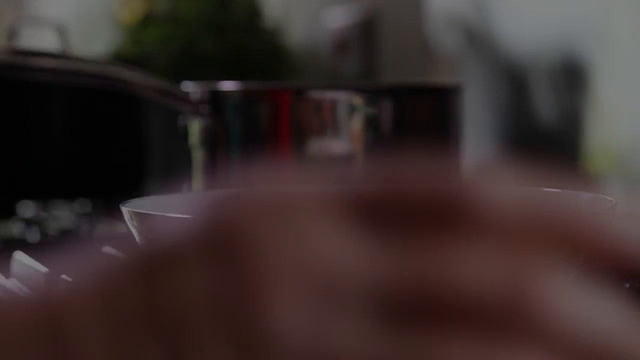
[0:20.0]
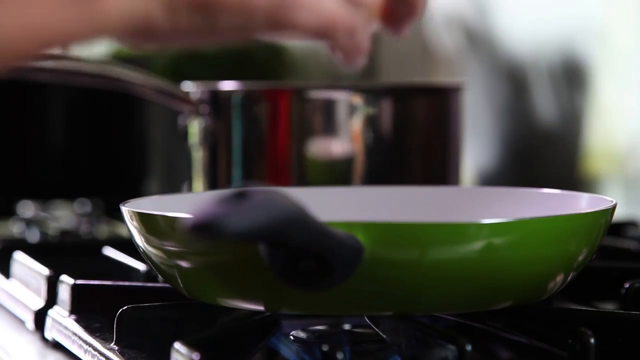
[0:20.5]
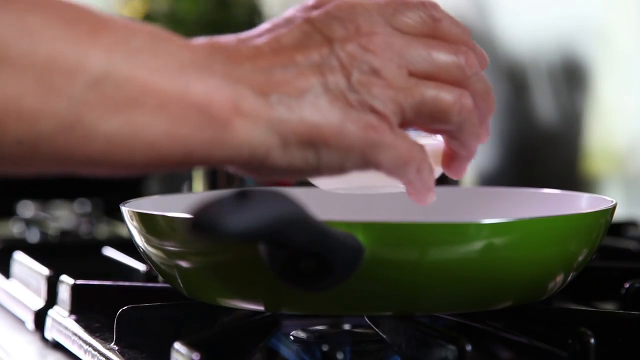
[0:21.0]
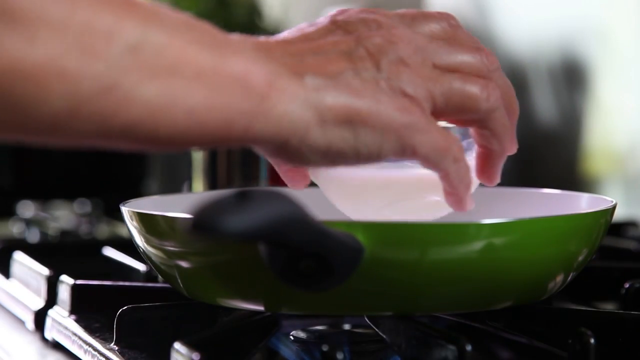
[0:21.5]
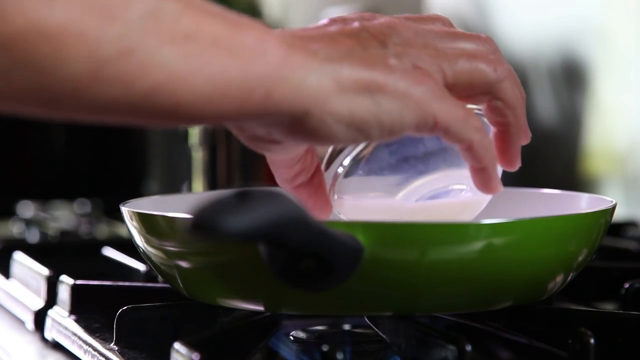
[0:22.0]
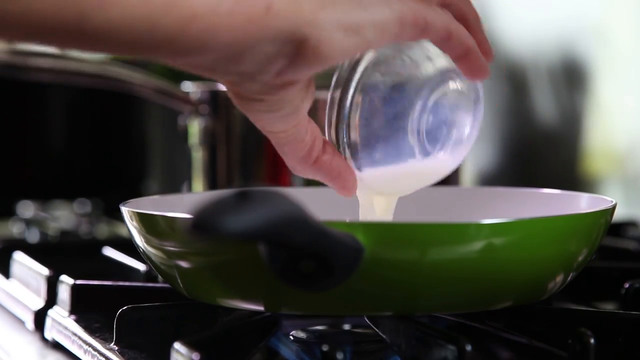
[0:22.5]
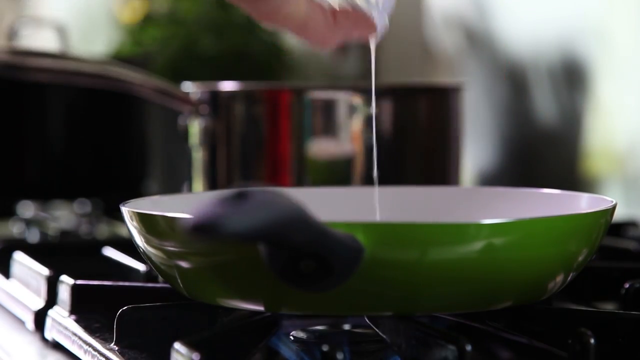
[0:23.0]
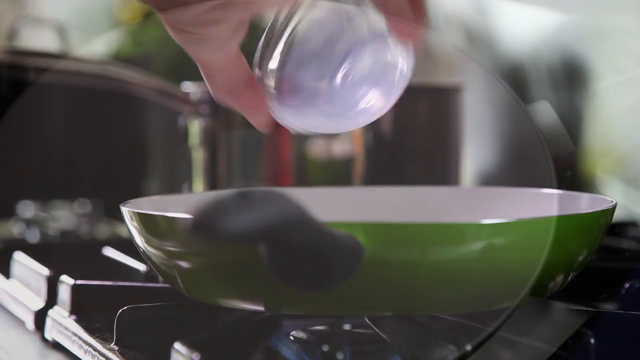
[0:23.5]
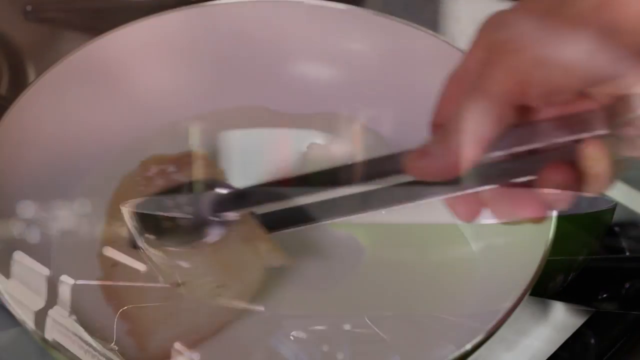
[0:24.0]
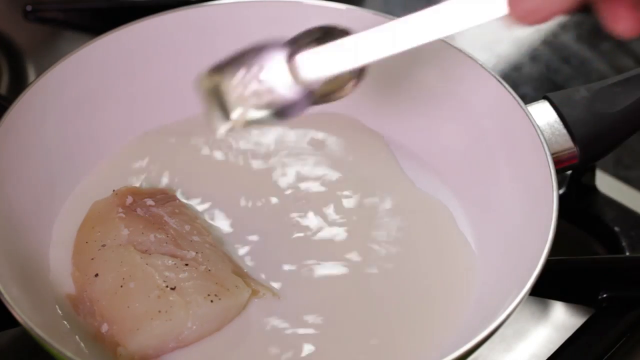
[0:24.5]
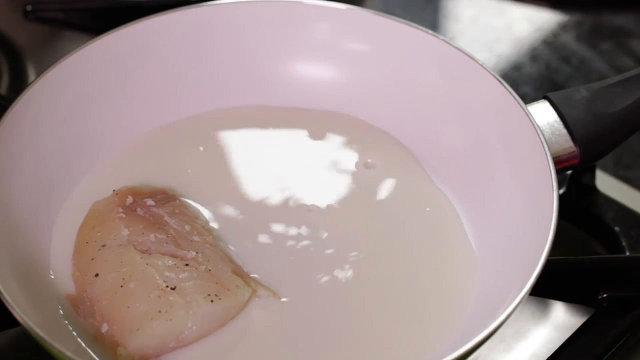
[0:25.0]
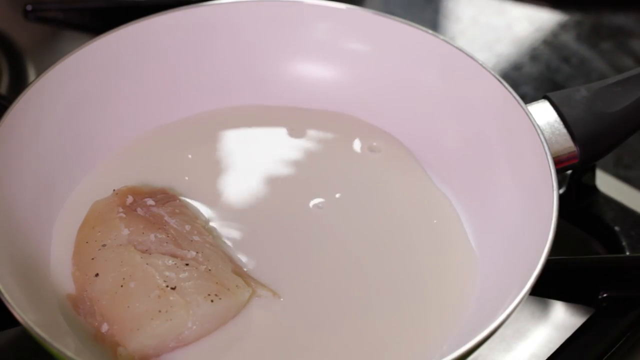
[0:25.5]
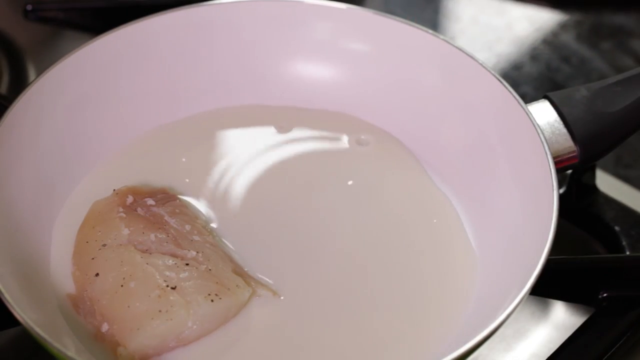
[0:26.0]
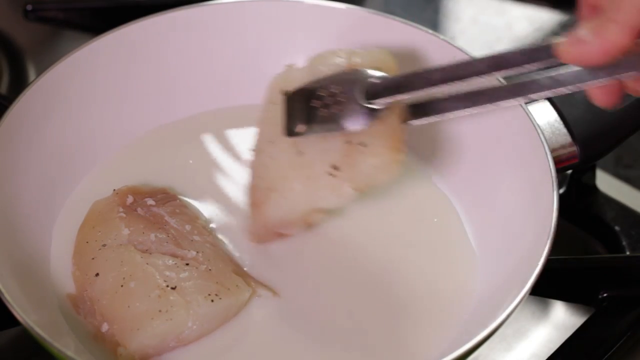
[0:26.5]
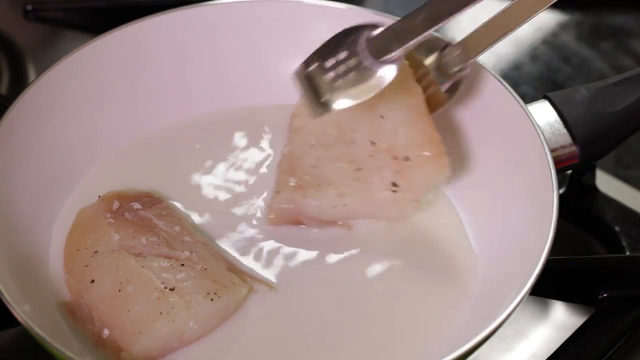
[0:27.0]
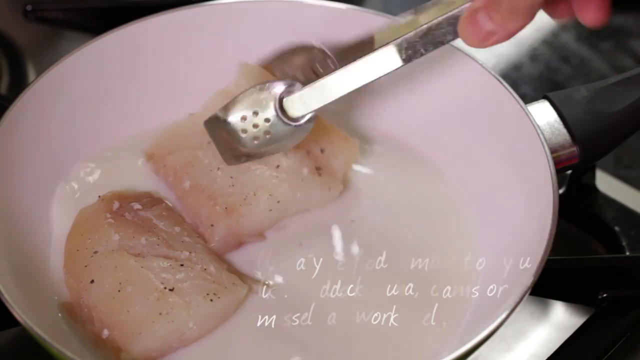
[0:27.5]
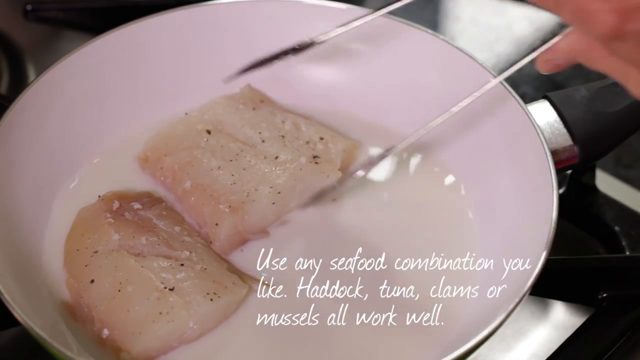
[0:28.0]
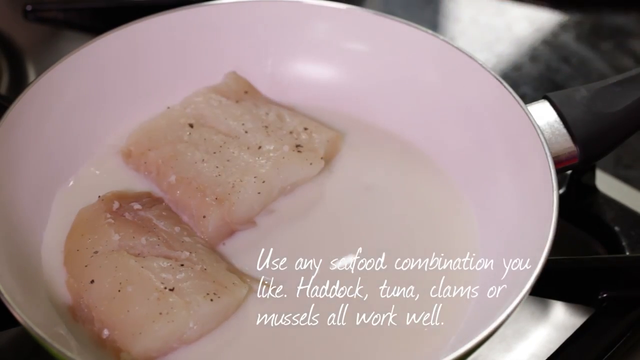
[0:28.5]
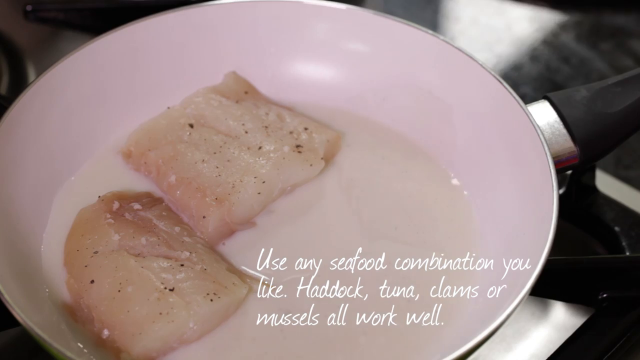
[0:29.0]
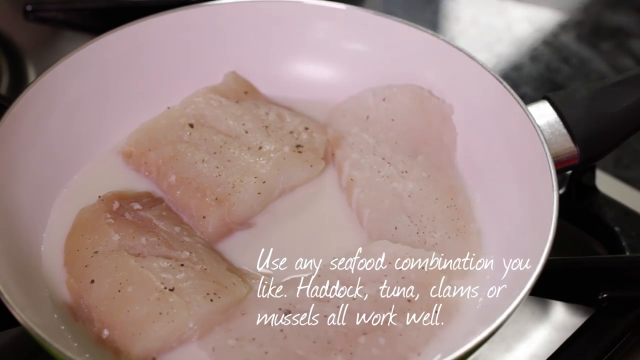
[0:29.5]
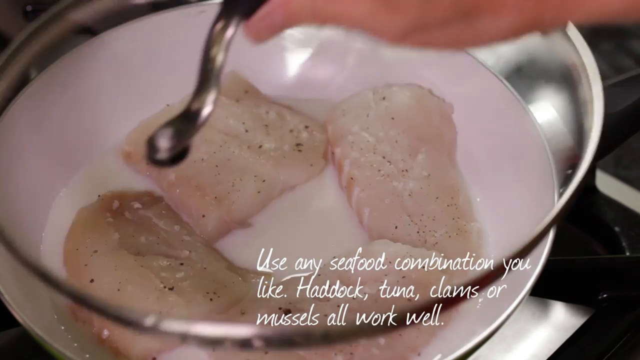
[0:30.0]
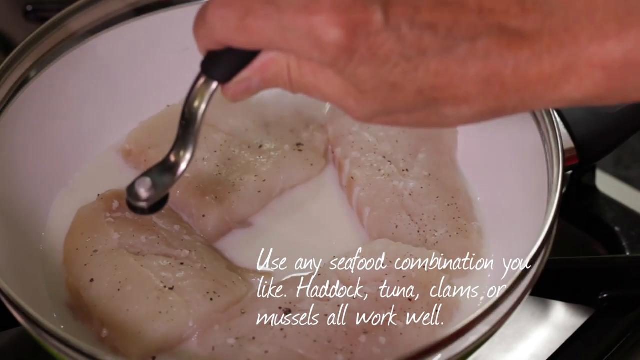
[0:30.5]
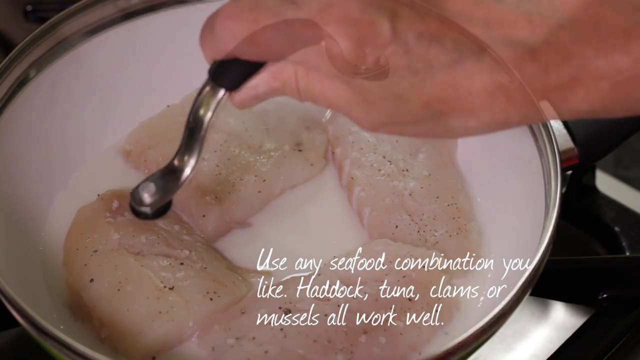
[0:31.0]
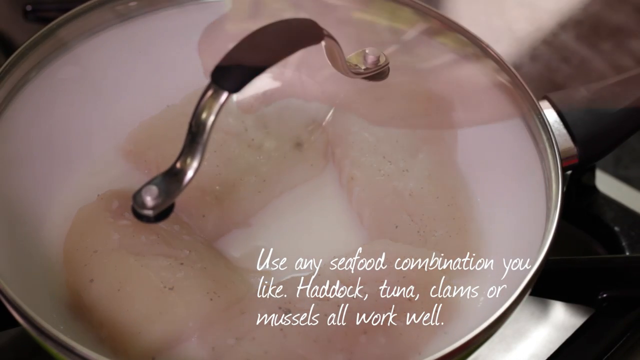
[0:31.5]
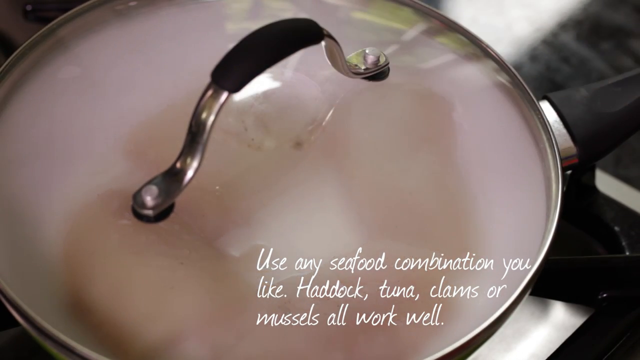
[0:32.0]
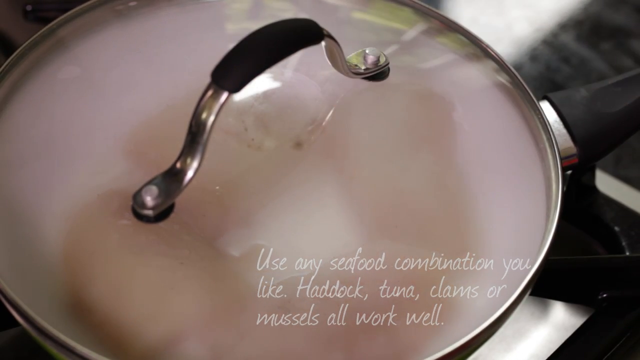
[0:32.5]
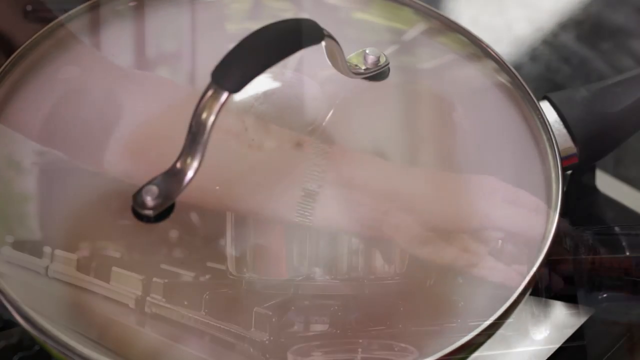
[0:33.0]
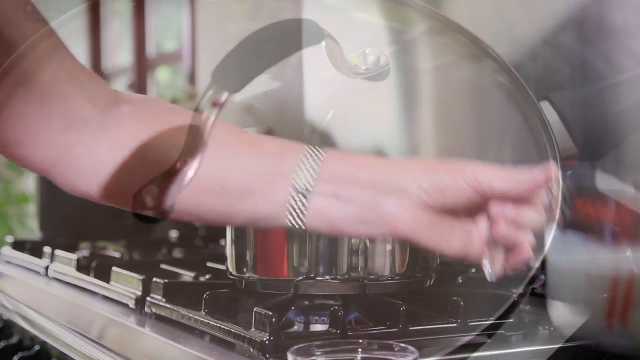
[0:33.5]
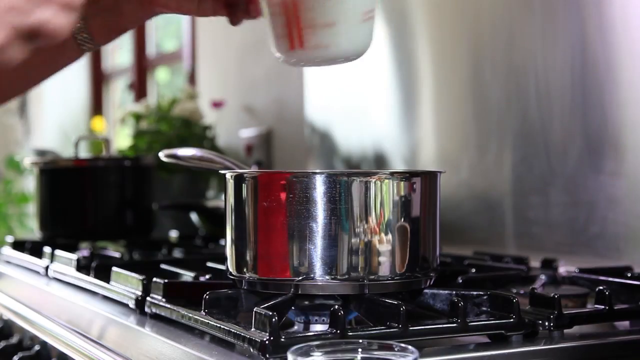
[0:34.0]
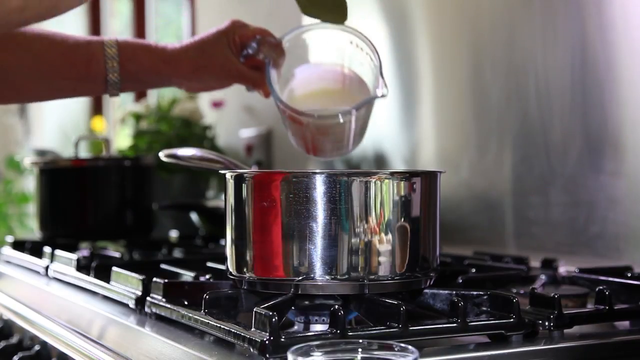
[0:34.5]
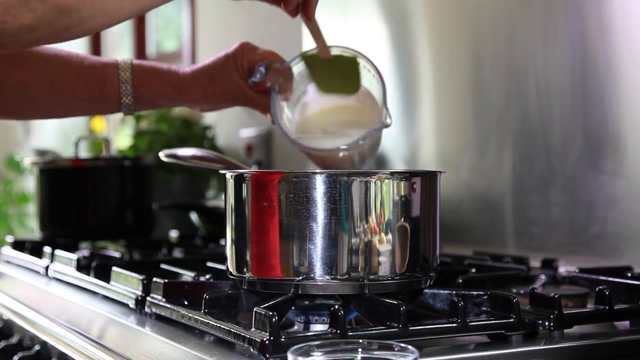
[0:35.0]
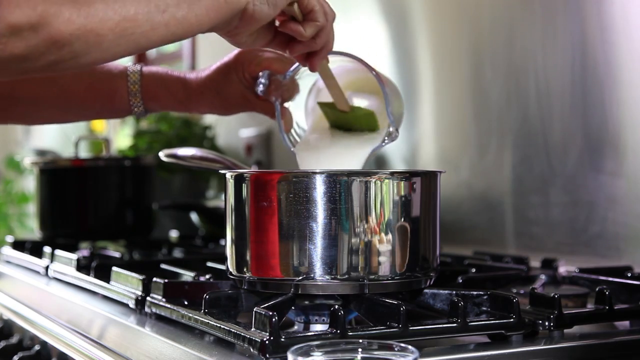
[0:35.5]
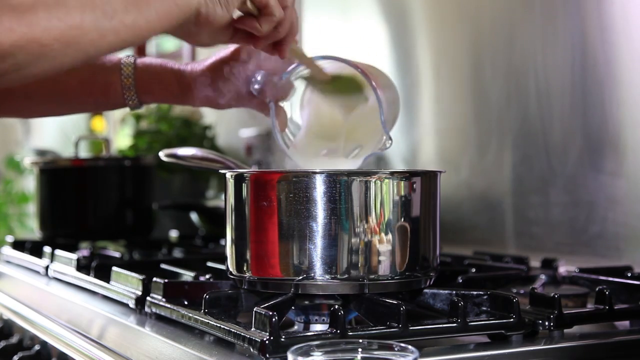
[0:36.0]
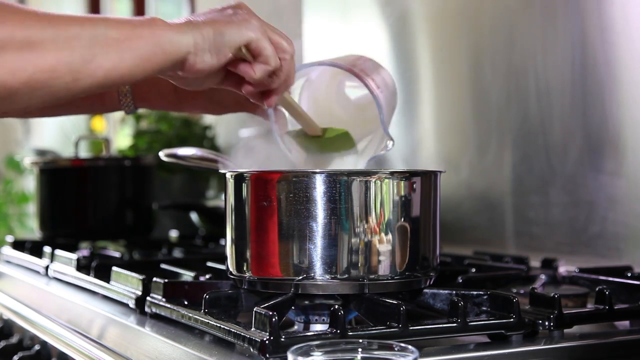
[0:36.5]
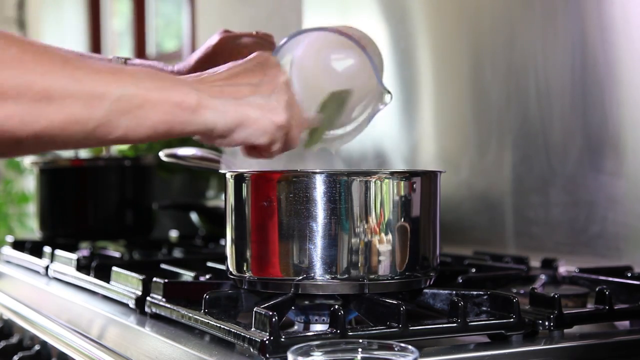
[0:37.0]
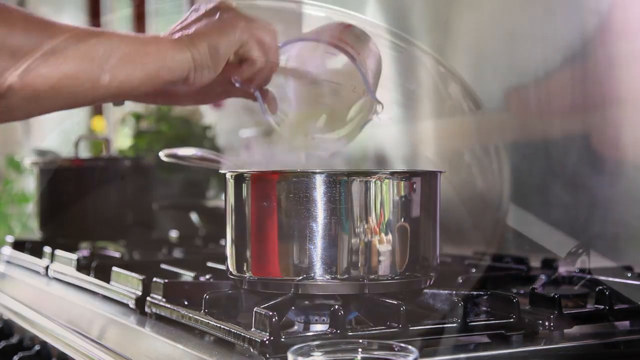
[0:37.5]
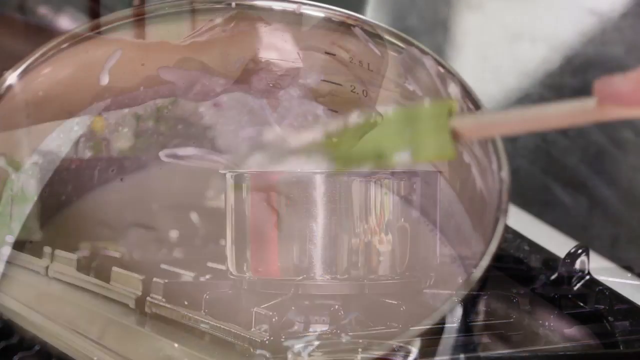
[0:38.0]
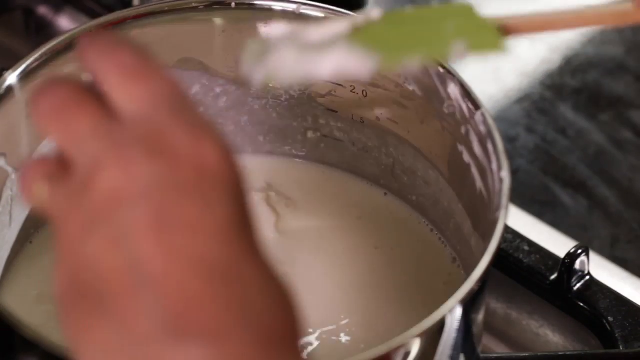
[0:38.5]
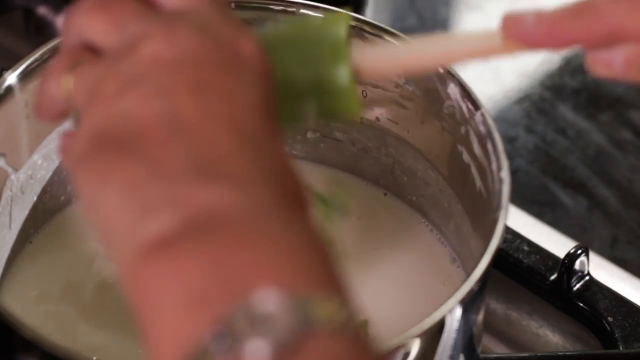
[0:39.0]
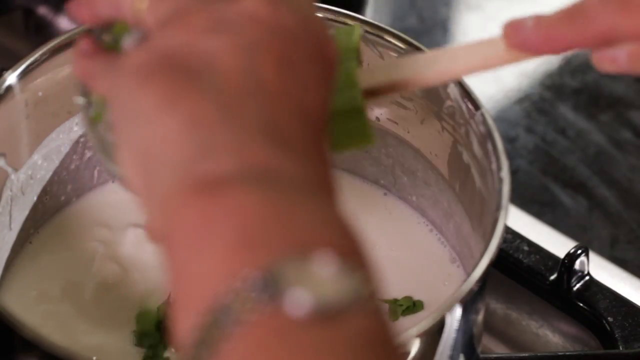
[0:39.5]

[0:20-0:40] In a kitchen, a zoomed-in view shows a stovetop with a green skillet on it, and a person's hand pours a sort of opaque white cream liquid into the frying pan. The video cuts to an overhead view where four pieces of fish are added to the frying pan. Text over the top of this says "you can use any seafood combination you'd like" and gives suggestions such as haddock, tuna, clams and mussels as options for the dish. A glass lid is placed over the top of the dish before it cuts to a separate stainless steel pot on a similar cooking station. A heavier cream is scooped out of a large measuring glass into this heavier stainless steel pot, and what appears to be some green leaves, like parsley, are mixed into the heavy cream cooking on the stove.